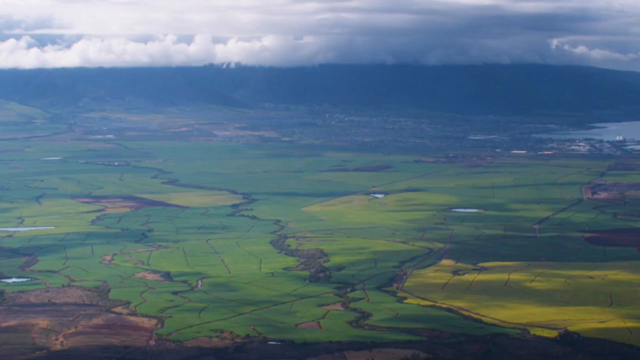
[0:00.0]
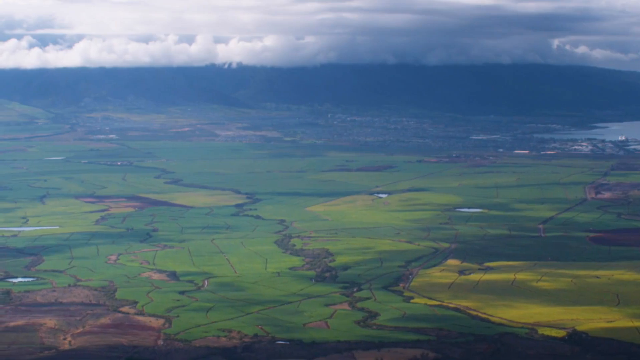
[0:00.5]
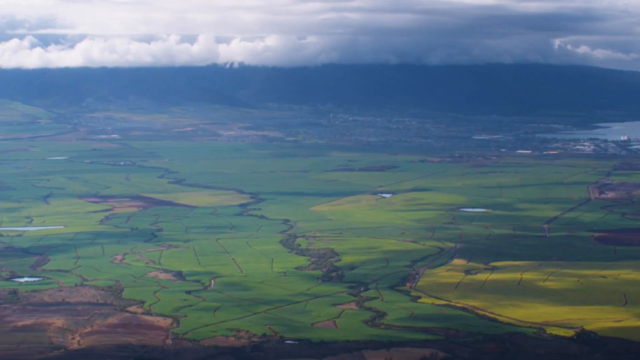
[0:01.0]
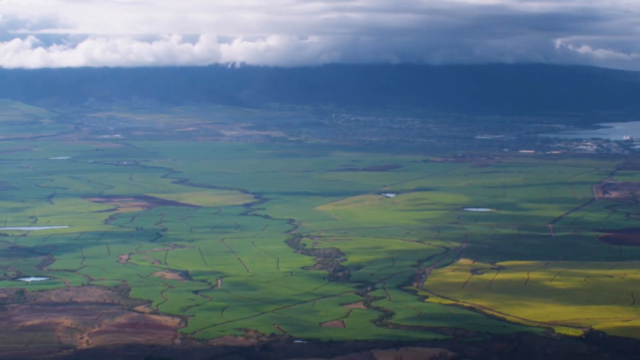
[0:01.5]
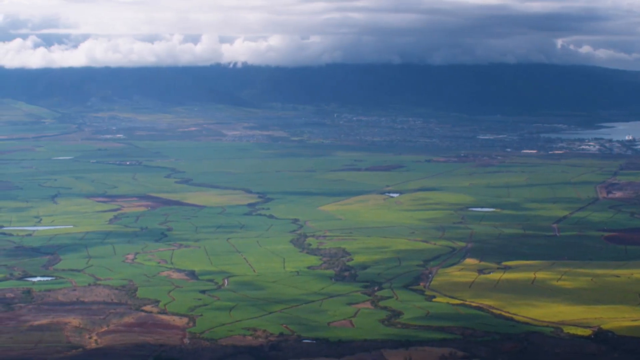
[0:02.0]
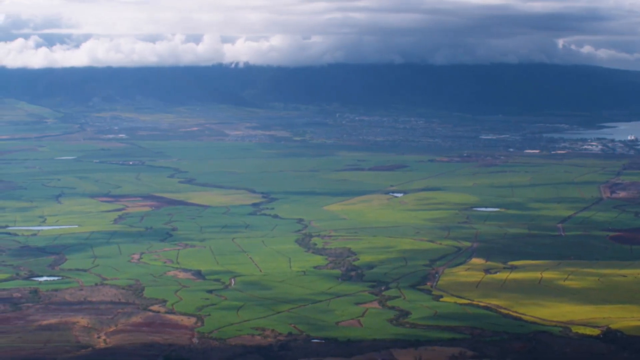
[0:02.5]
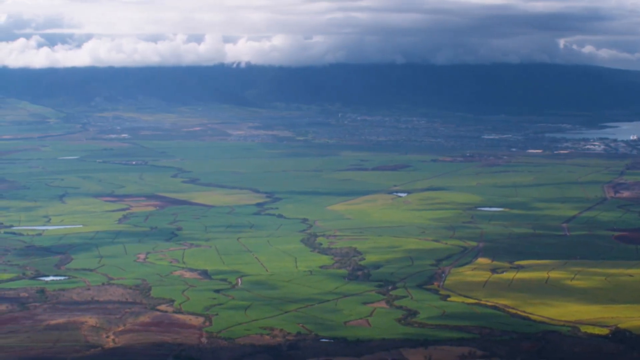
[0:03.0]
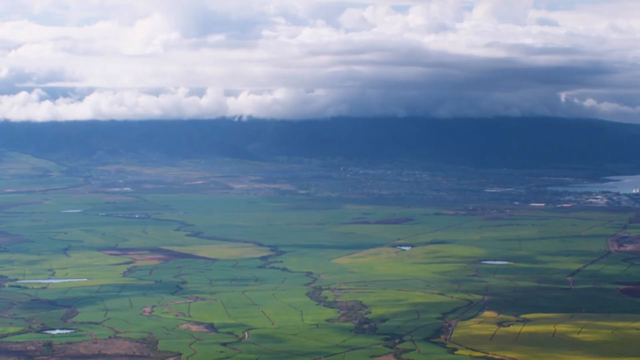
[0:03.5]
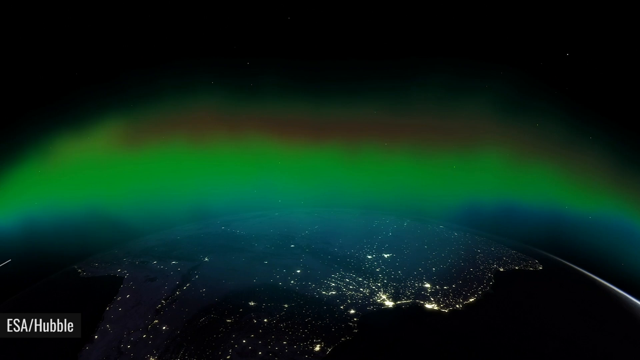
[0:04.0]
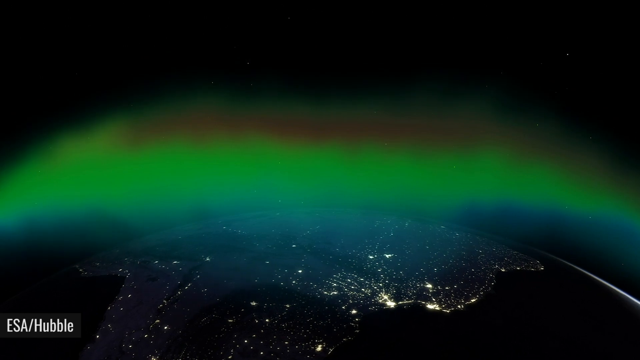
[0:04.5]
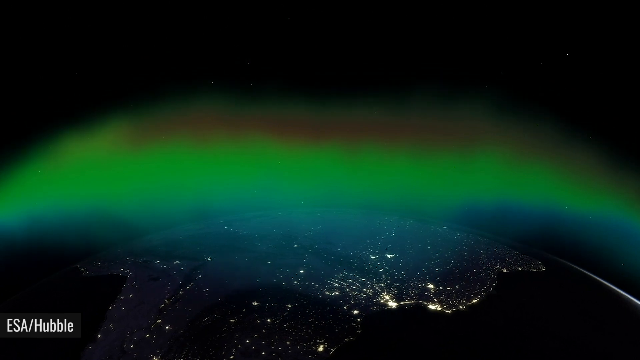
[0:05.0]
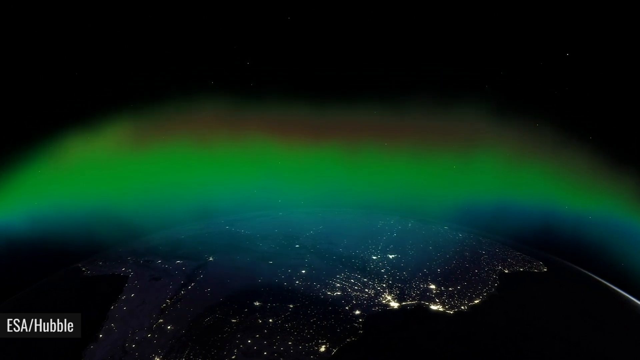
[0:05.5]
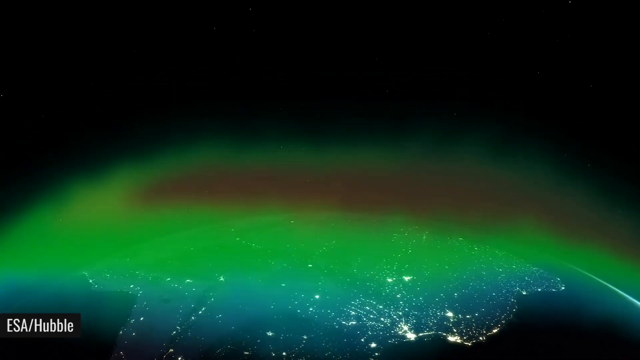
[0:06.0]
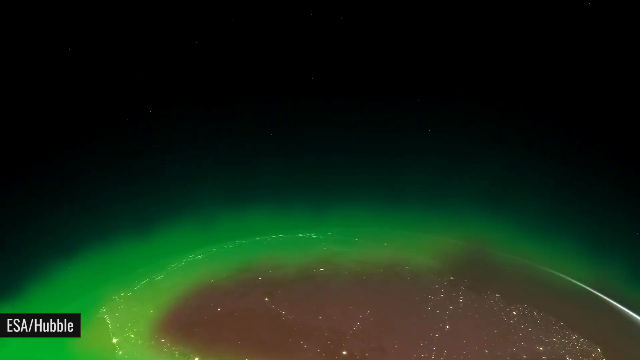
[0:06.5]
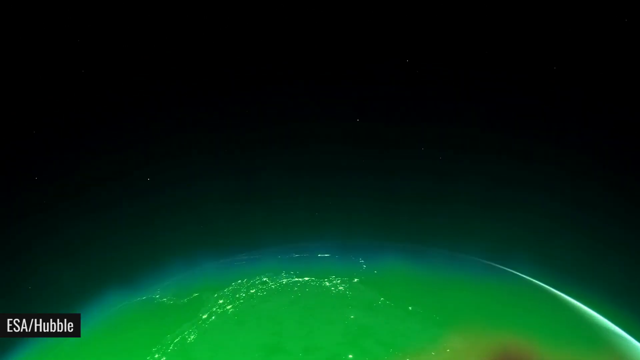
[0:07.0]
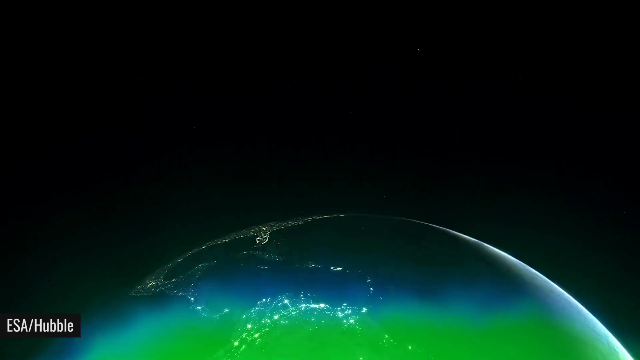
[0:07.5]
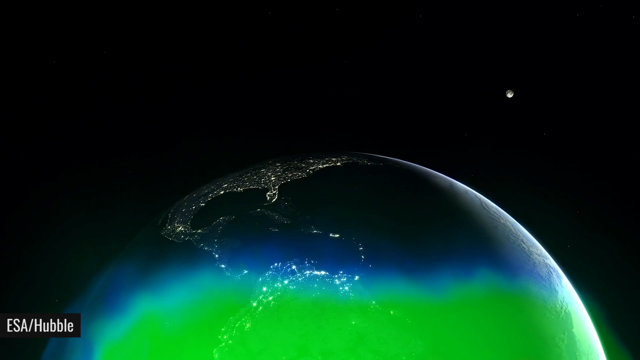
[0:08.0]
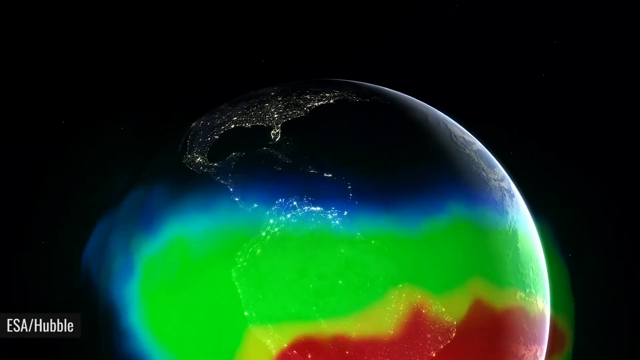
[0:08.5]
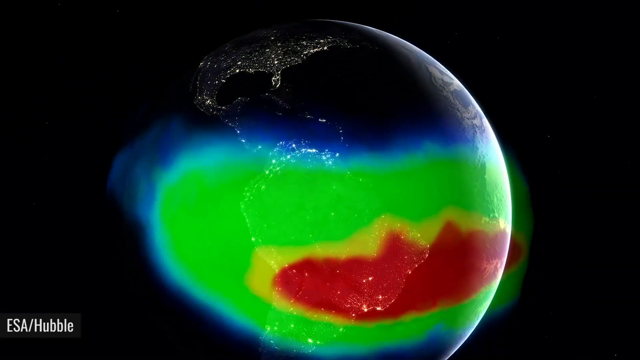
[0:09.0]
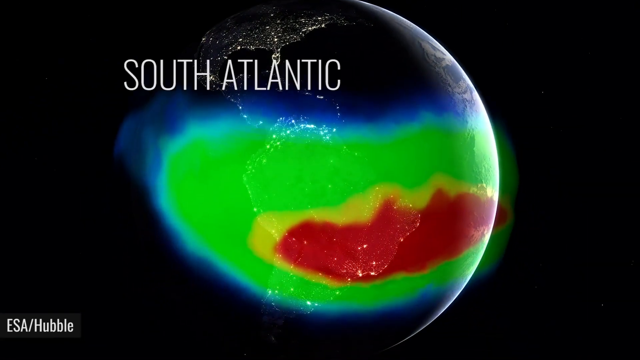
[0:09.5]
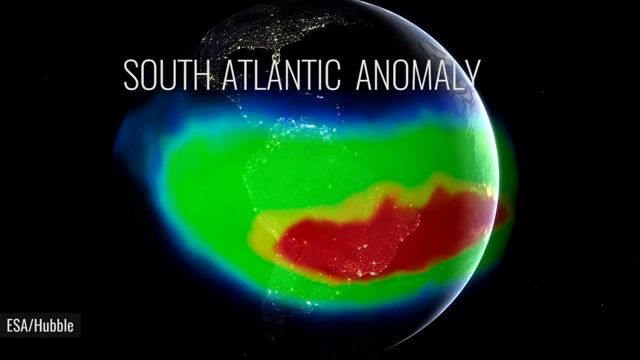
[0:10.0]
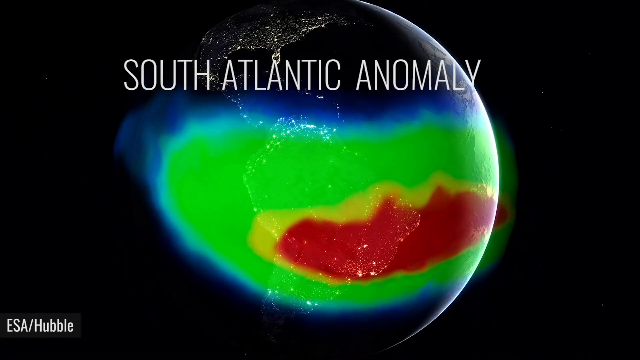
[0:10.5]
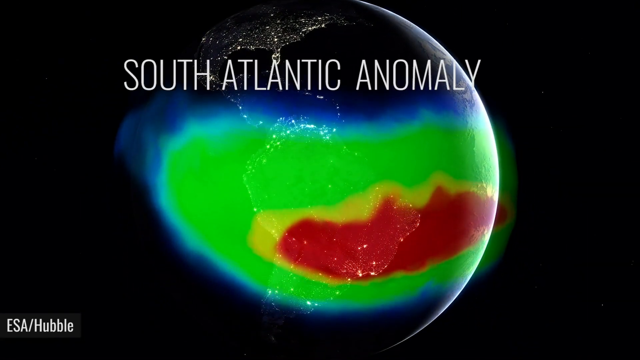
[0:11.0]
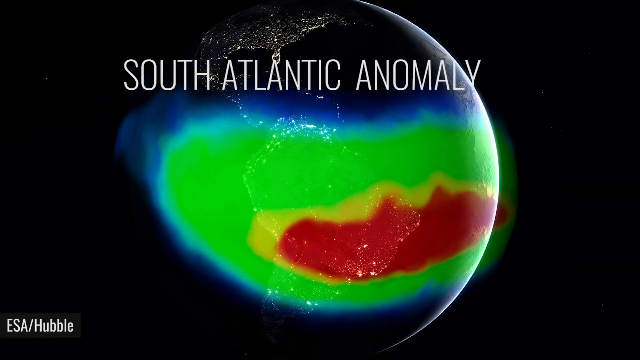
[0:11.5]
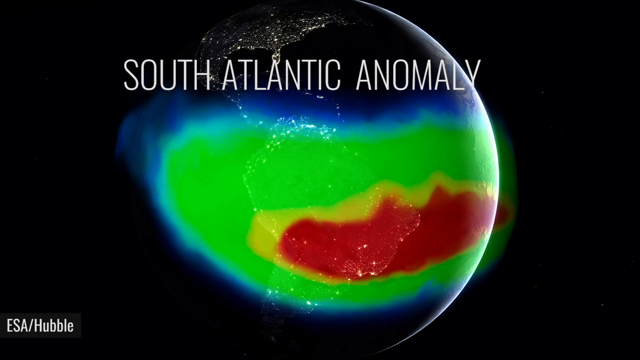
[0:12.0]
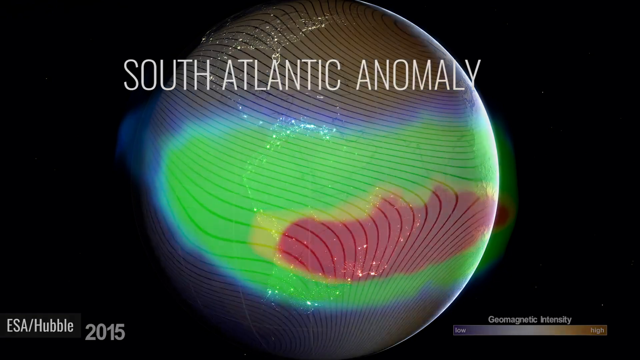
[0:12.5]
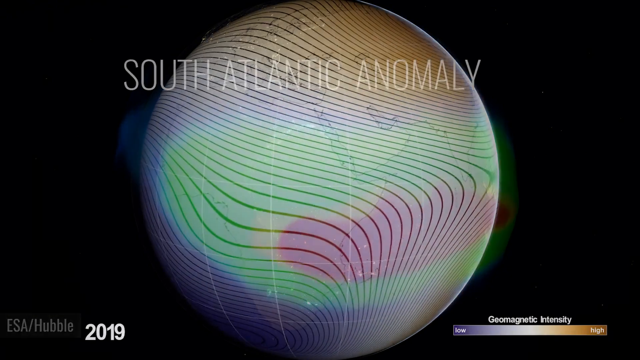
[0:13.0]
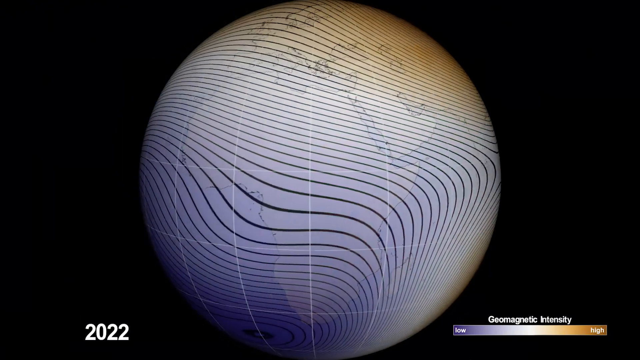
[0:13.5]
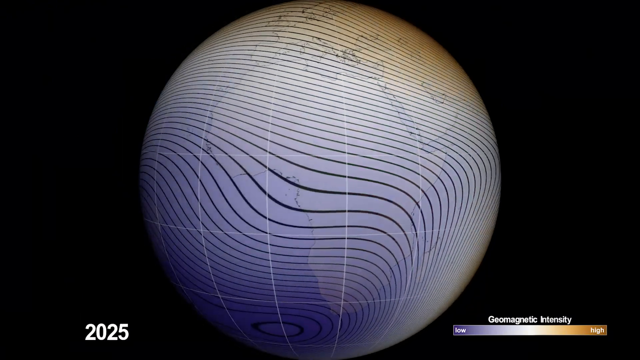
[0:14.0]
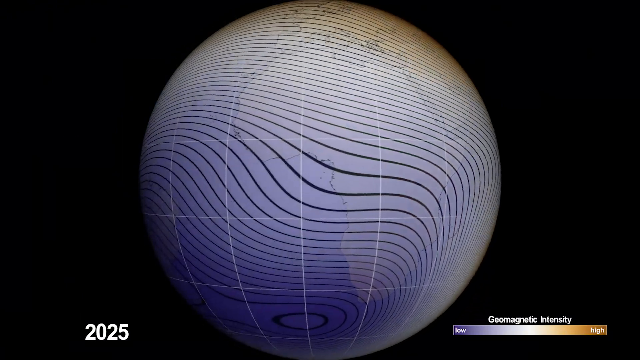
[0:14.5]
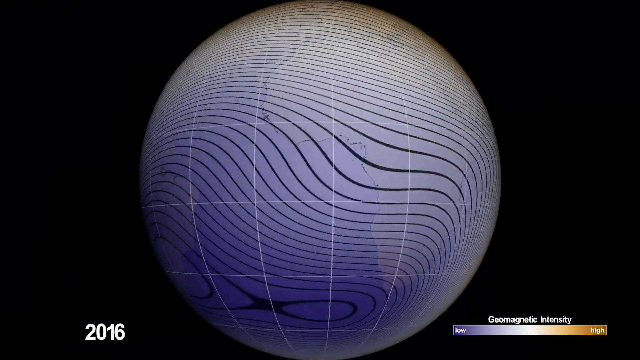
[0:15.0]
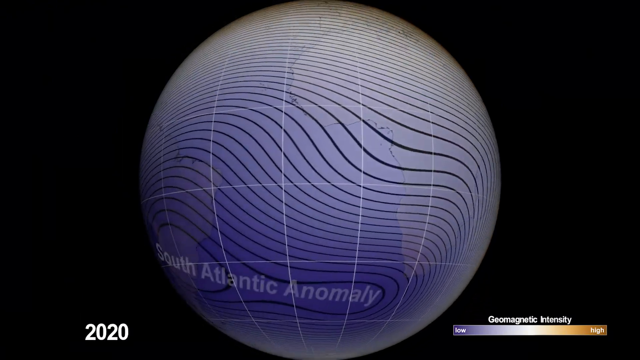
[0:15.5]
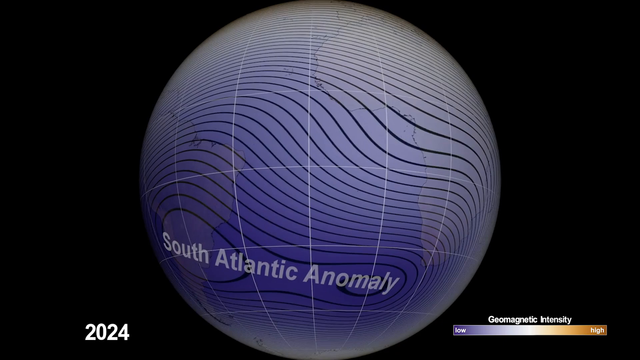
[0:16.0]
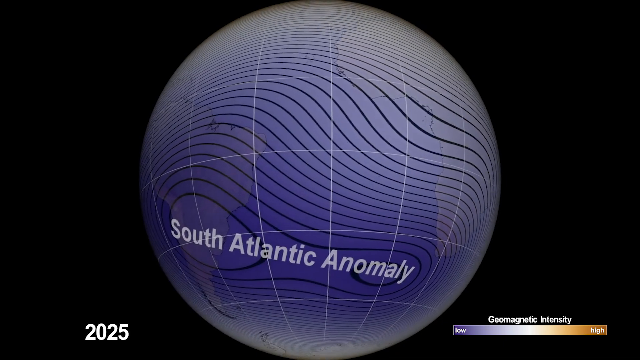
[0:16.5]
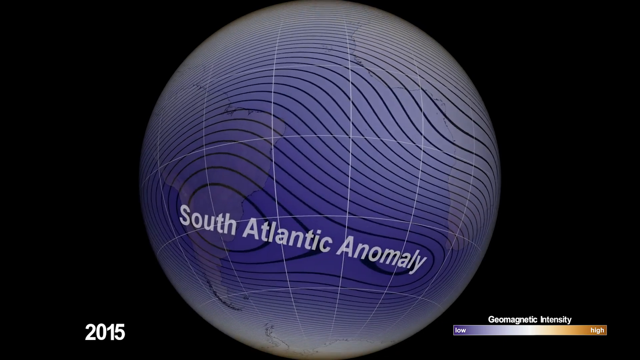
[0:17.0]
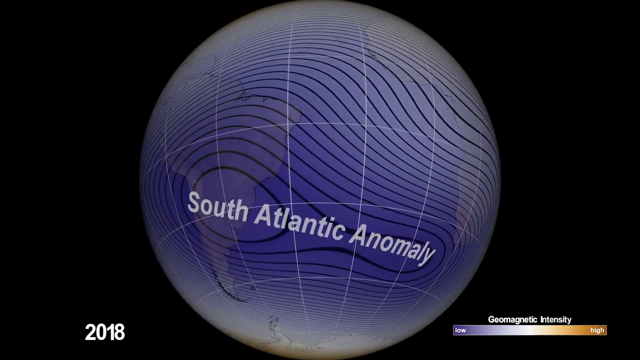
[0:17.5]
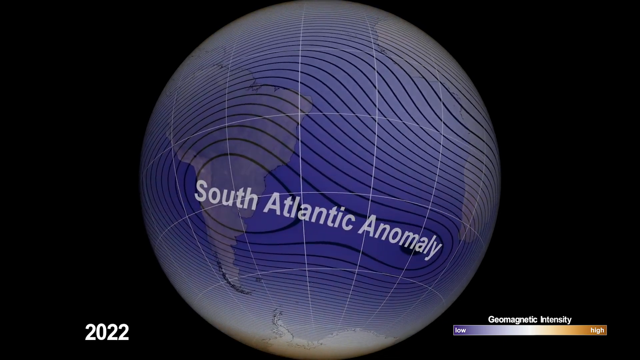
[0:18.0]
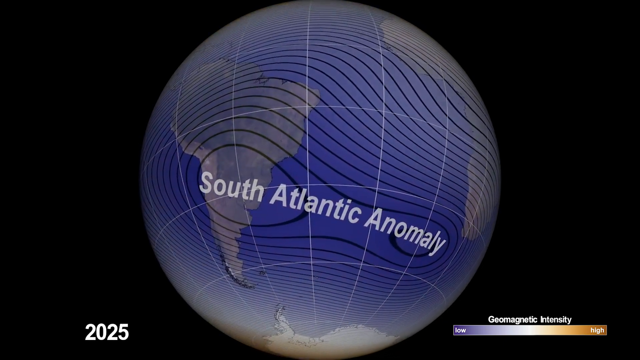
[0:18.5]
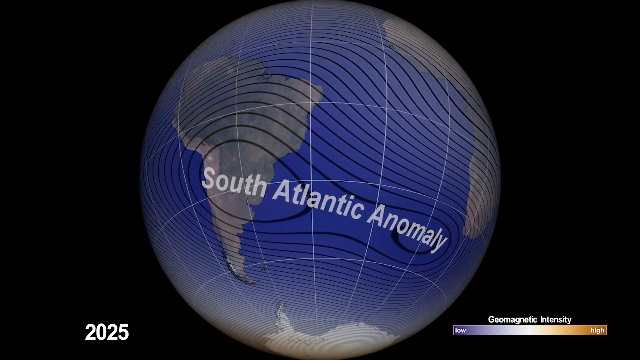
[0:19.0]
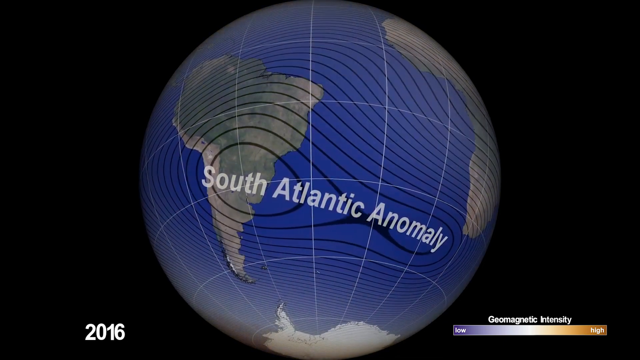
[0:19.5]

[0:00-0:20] An image shows a wide range of green fields with patches of forest running through them. Toward the top of the screen, in the far distance, there is what looks like some kind of city, with a lake over toward the right. Across roughly the top fifth of the screen is a portion of white clouds. The video then zooms out to a view of Earth from the atmosphere. Toward the bottom of the screen, Earth is seen at night with lights shining. Above that, in the area where the atmosphere would be, a heat map shows a large green area extending across most of South America and continuing onward over the ocean; nestled within it is a yellow area, and within that a red area, each smaller than the last. The words "South Atlantic Anomaly" are on the screen. The globe turns toward the right, with a pattern of black wavy lines across the surface of the Earth as it moves down toward the South Pole, hovering over South America again and again showing the words "South Atlantic Anomaly".